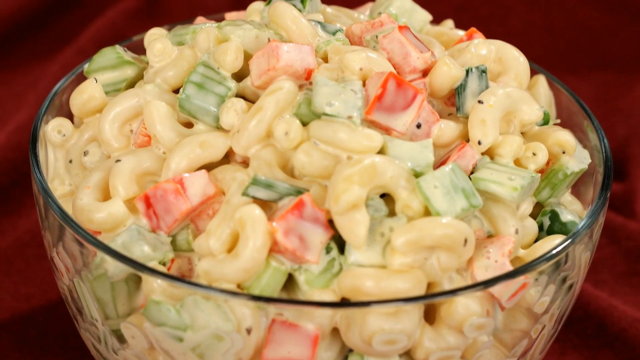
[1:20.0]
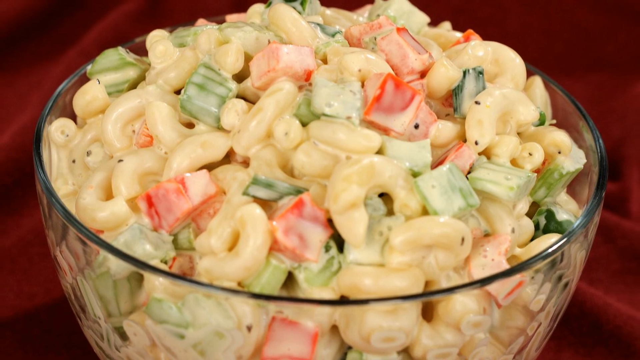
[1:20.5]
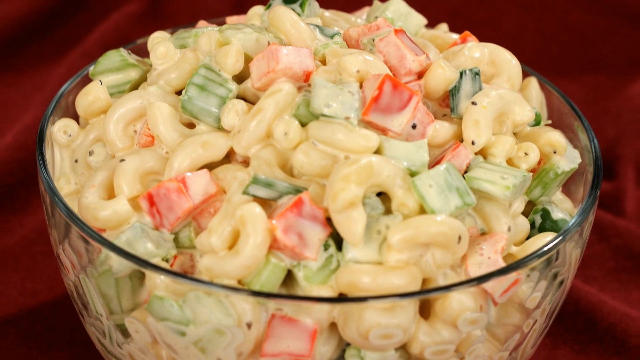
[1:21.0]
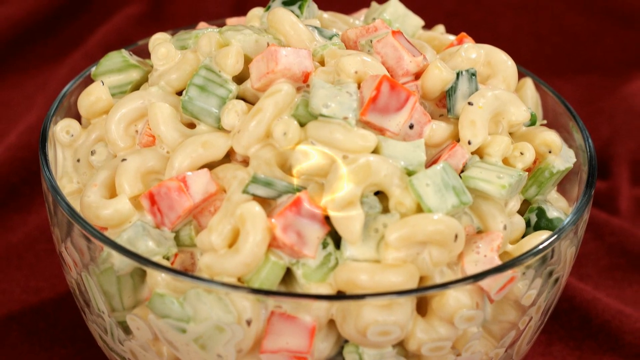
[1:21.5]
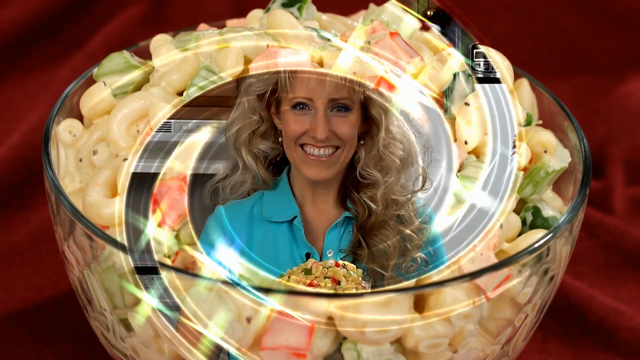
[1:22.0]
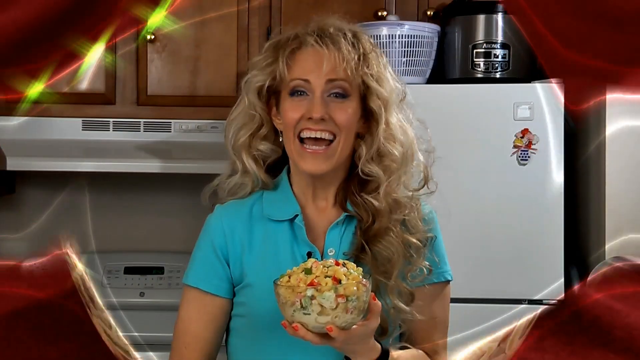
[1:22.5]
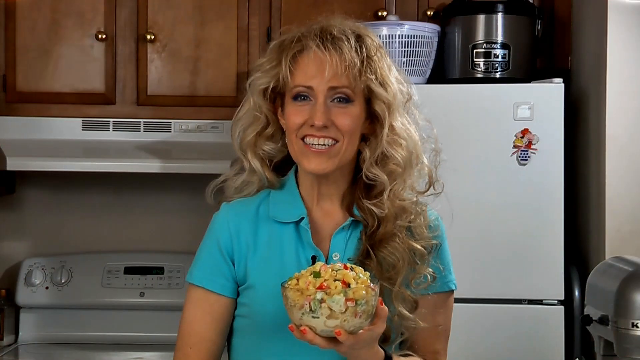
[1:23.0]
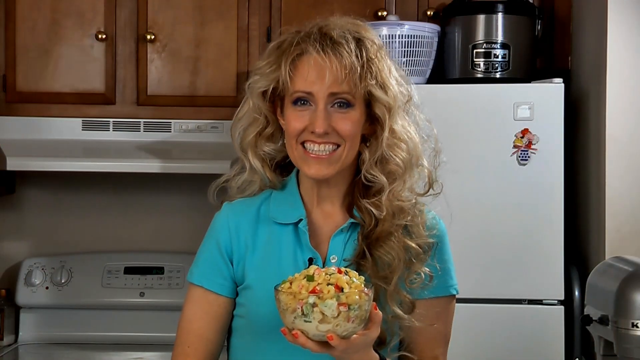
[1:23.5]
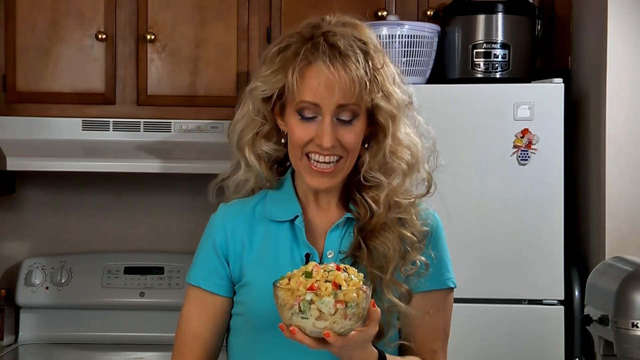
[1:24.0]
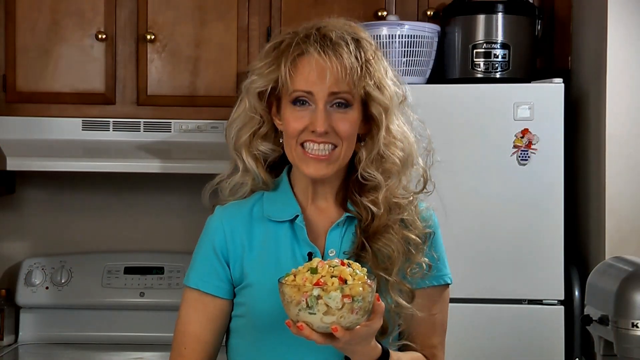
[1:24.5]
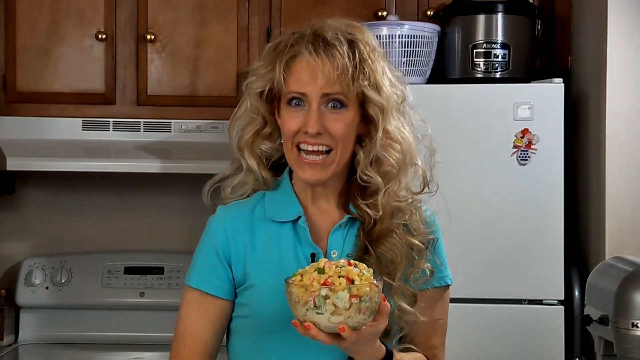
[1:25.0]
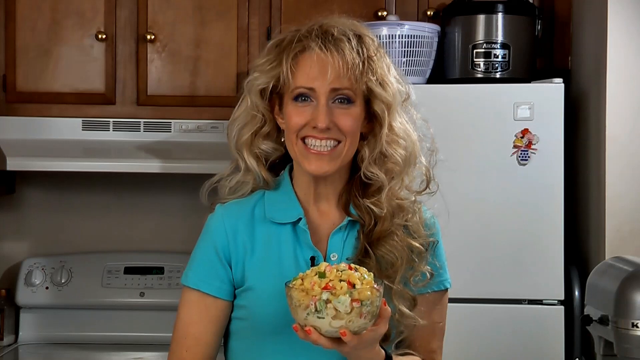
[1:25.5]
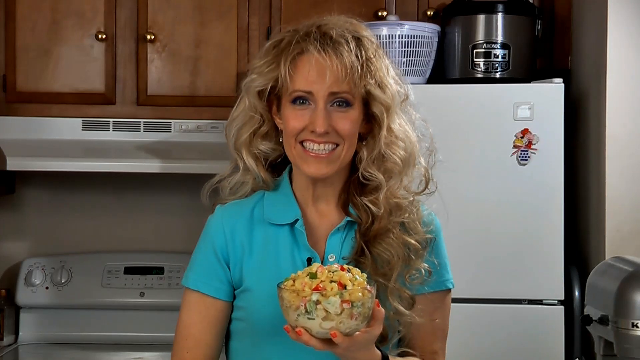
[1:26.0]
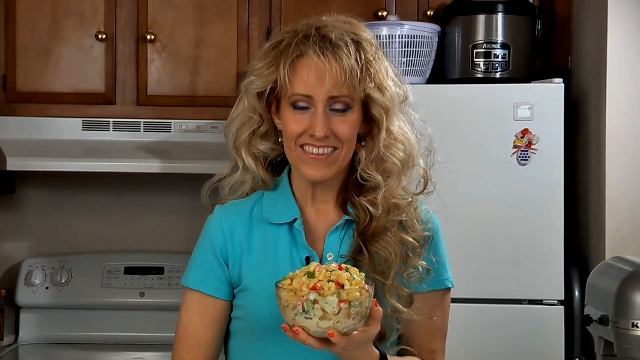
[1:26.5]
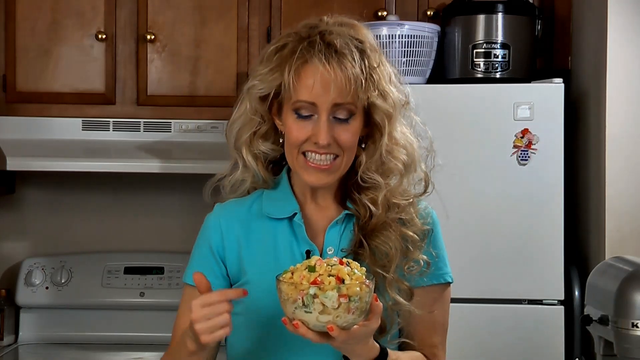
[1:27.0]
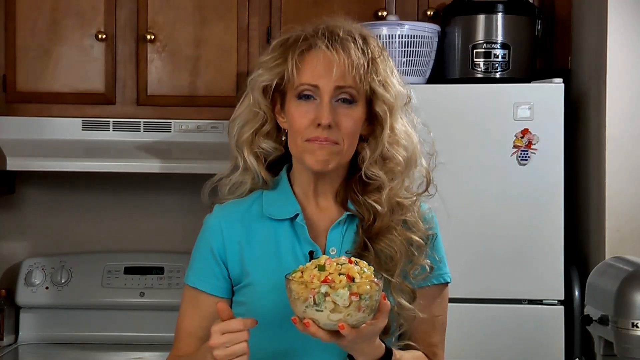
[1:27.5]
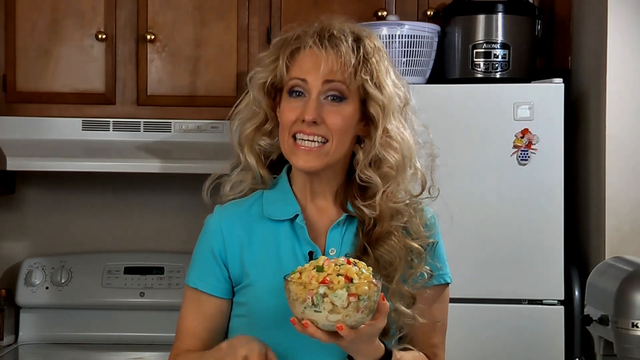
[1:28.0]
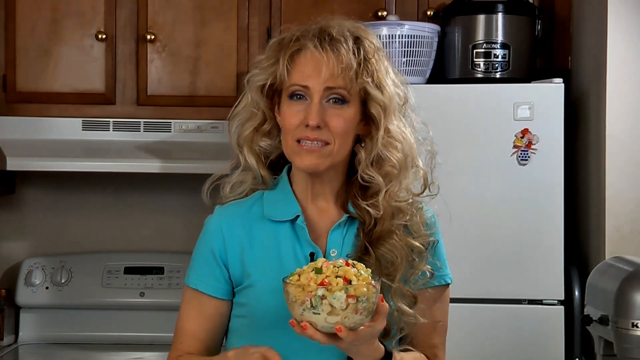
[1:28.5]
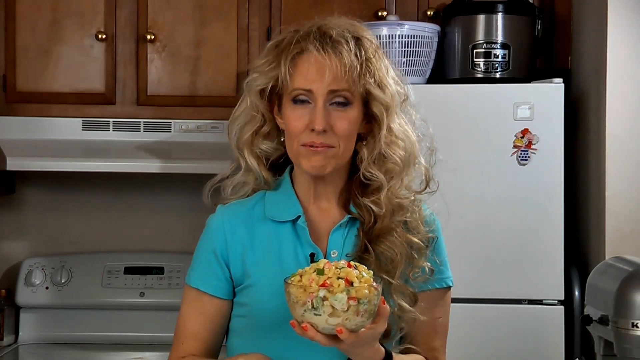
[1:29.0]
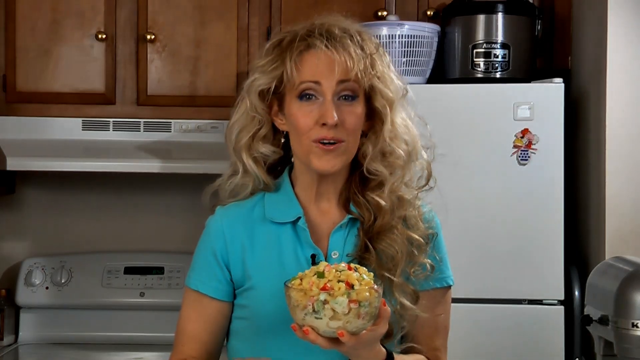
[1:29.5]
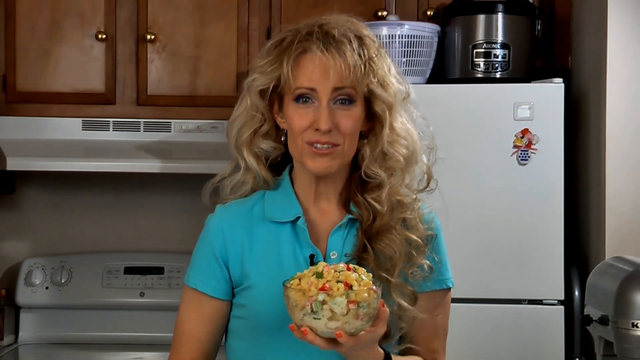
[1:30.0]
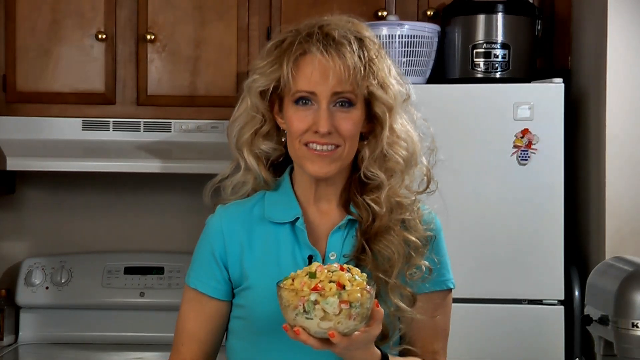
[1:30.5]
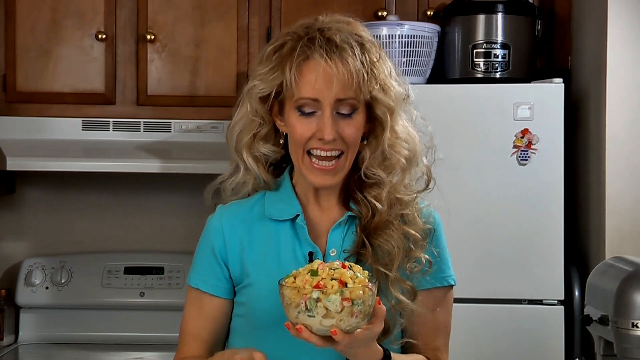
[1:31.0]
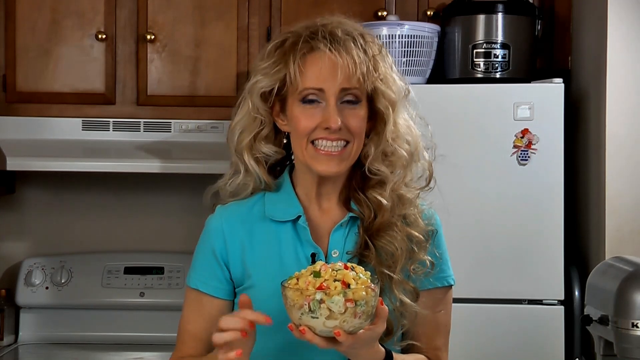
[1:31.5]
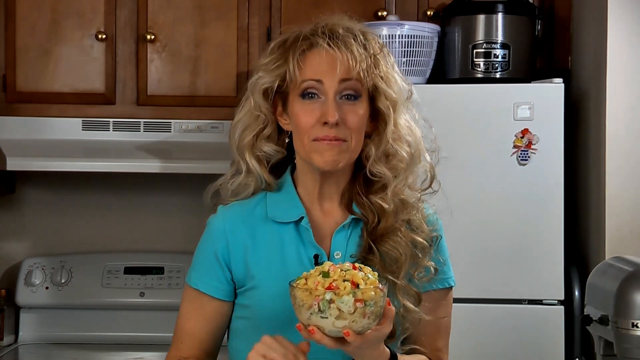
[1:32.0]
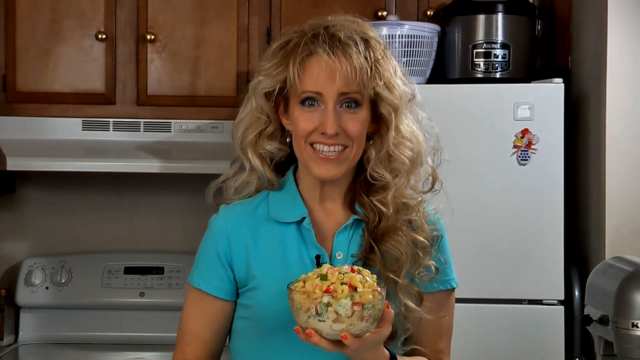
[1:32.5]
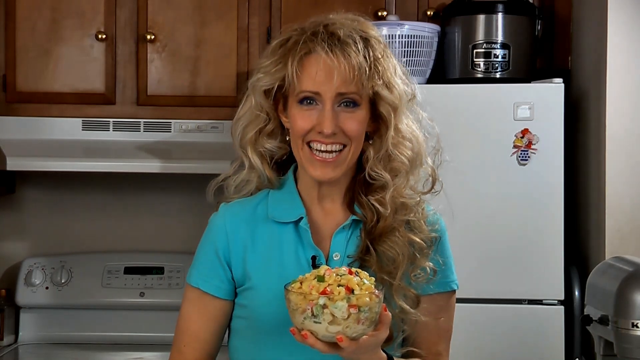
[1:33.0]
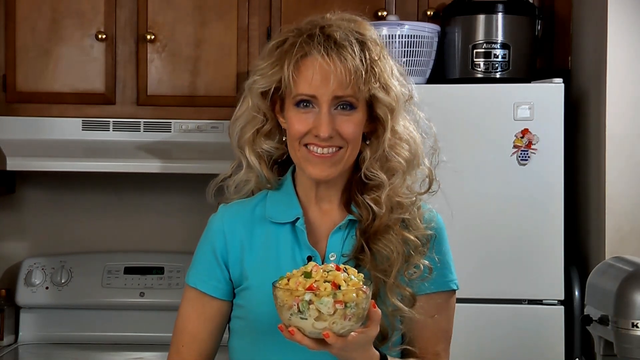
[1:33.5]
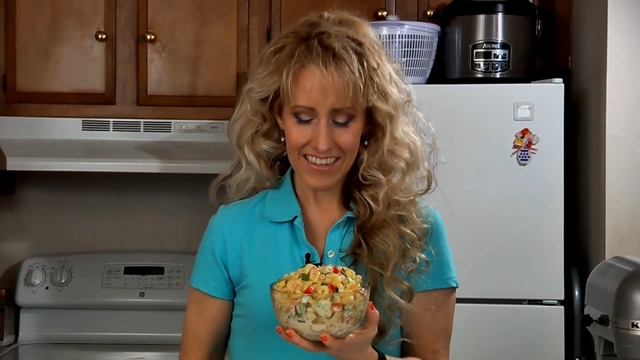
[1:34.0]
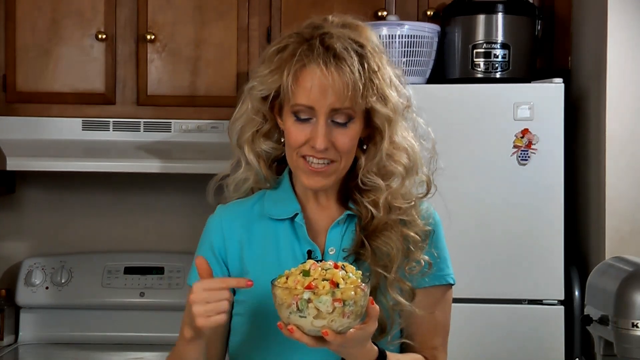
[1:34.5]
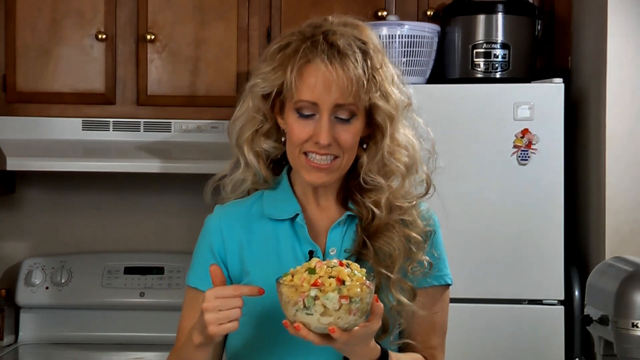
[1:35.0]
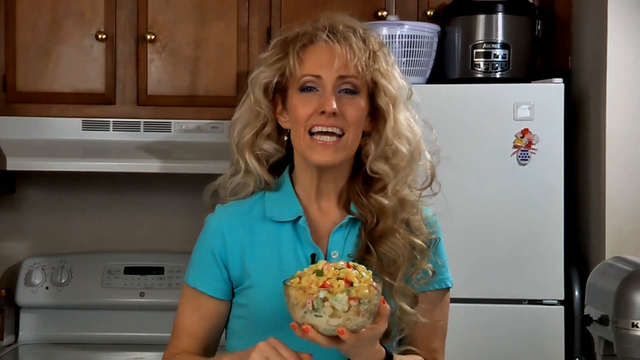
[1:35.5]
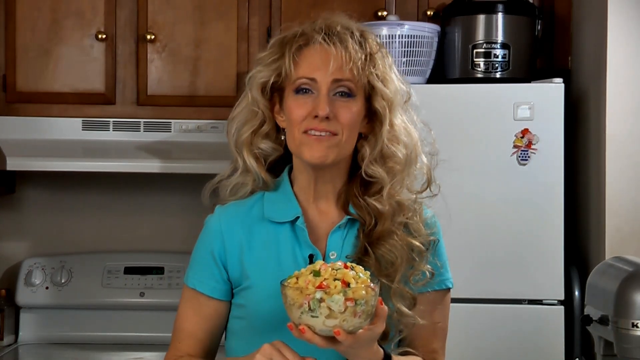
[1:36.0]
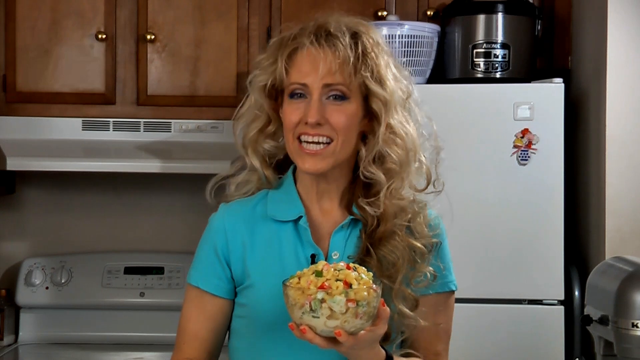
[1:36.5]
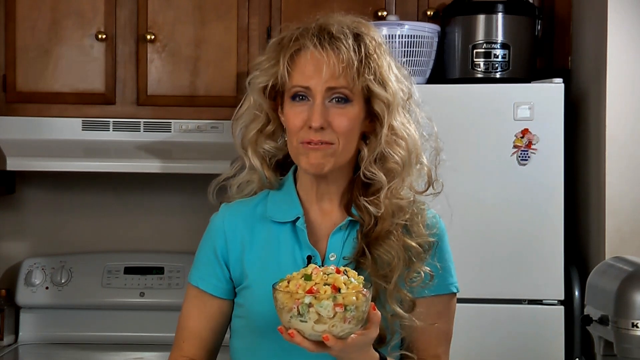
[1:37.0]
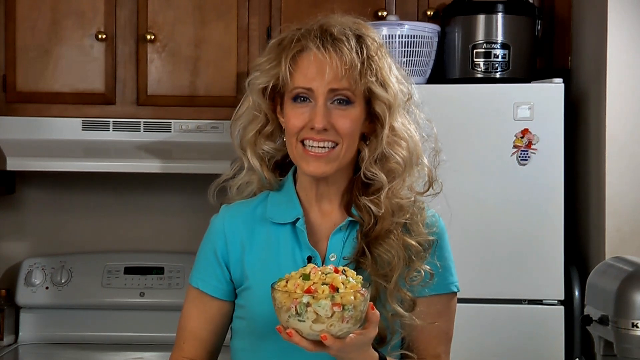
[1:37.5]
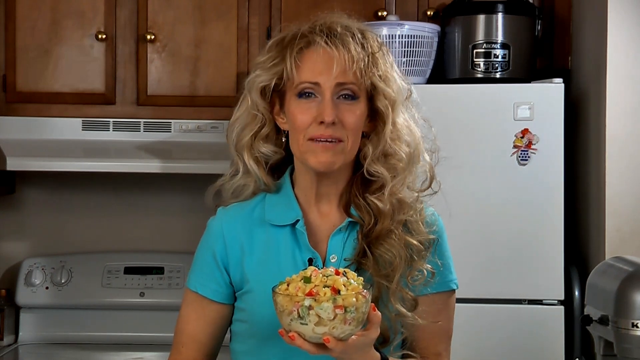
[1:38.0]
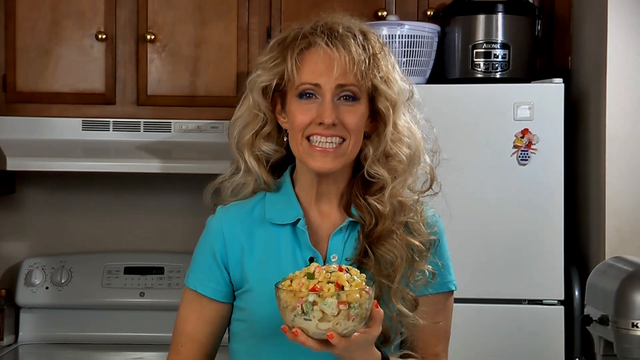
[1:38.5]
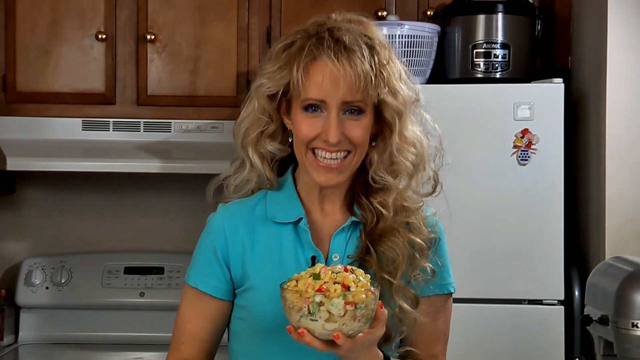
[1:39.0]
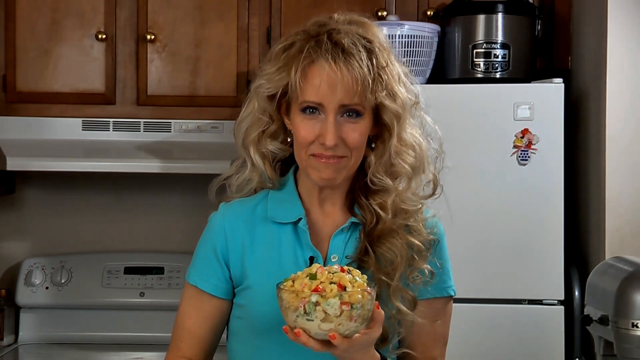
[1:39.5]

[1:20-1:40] The woman takes a colorless bowl and puts it on top of the table, and the camera zooms out on the bowl. She is then shown in the kitchen carrying the bowl of the finished food with the different vegetables. She looks very happy as she holds up the food and shows the dish to the screen.